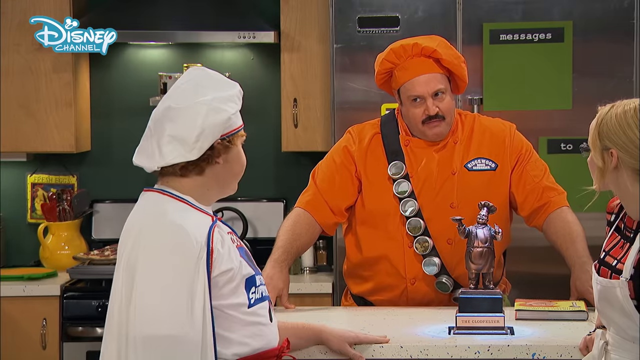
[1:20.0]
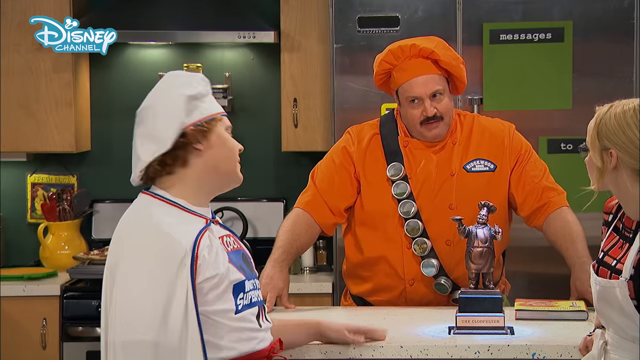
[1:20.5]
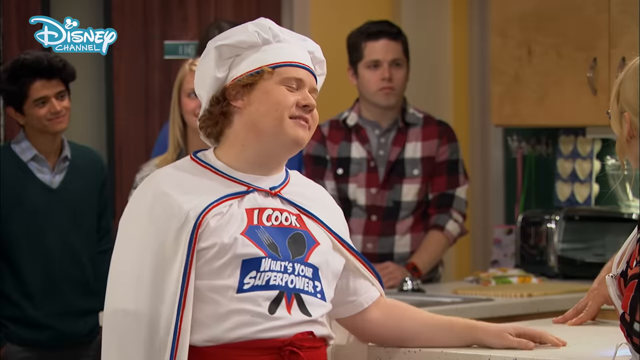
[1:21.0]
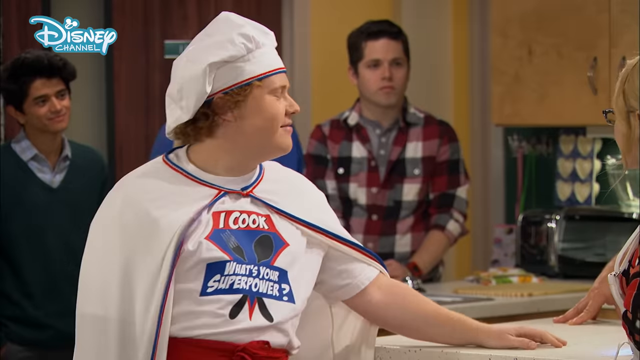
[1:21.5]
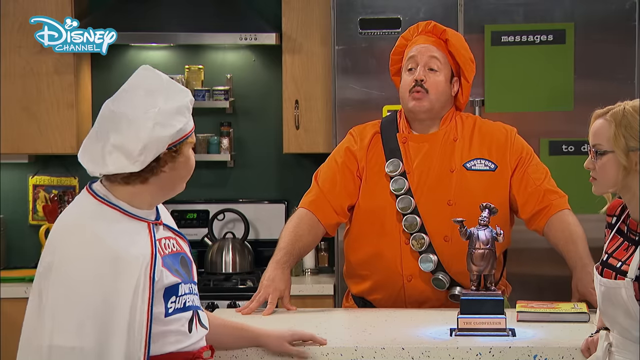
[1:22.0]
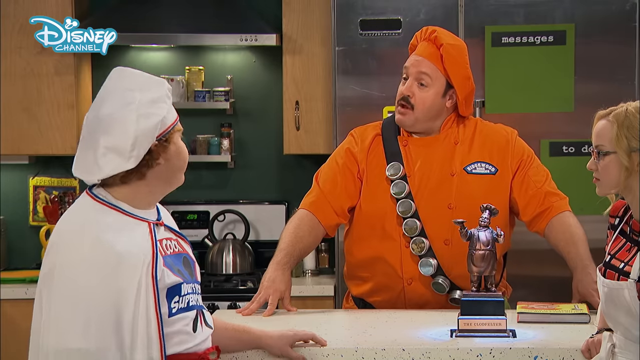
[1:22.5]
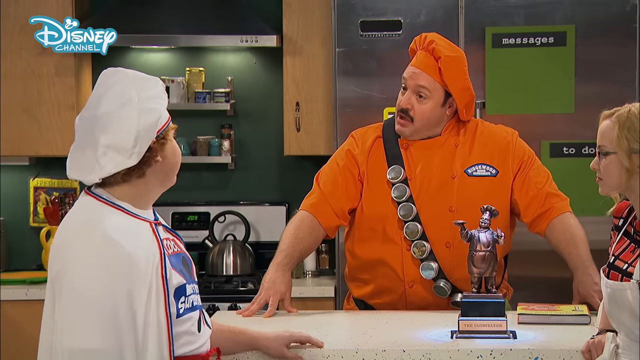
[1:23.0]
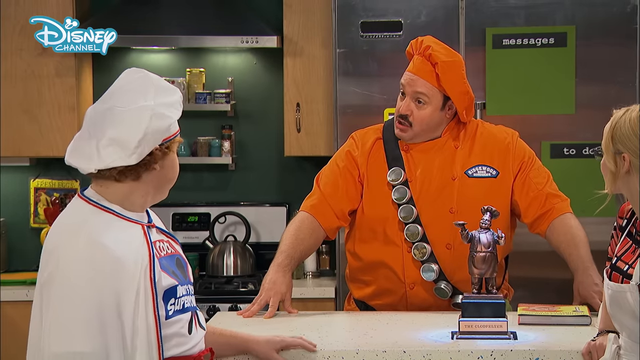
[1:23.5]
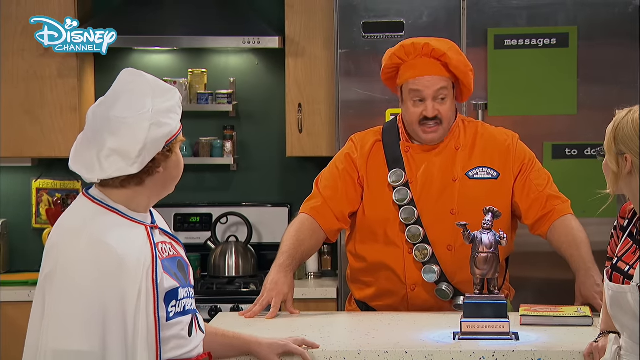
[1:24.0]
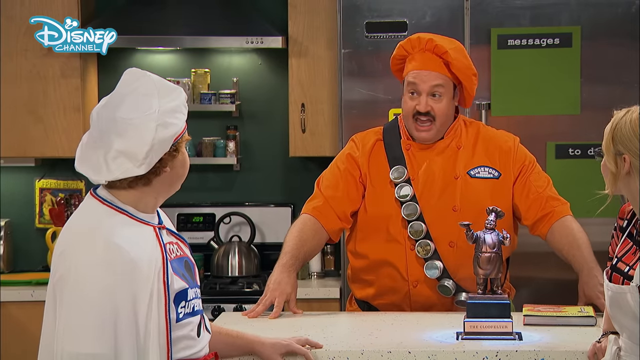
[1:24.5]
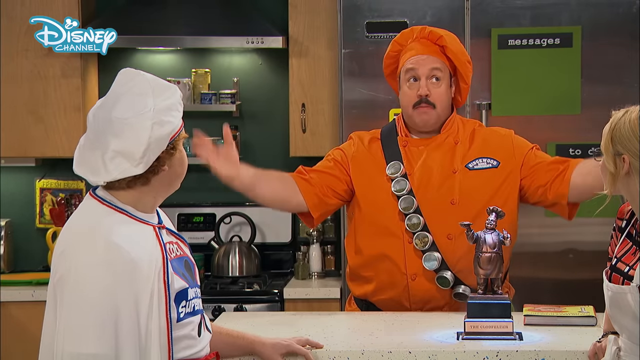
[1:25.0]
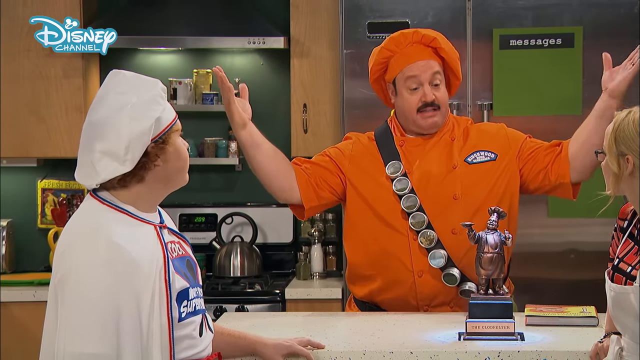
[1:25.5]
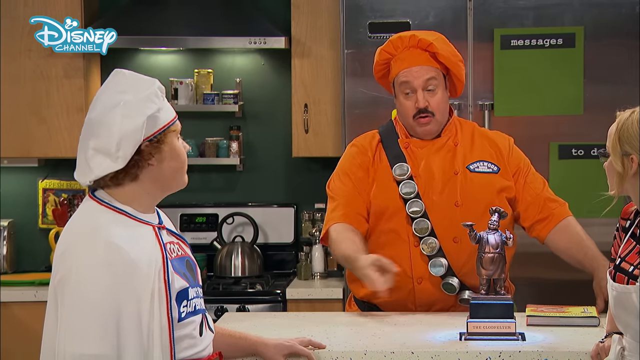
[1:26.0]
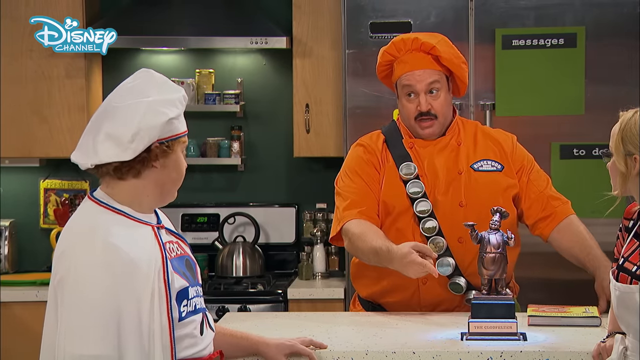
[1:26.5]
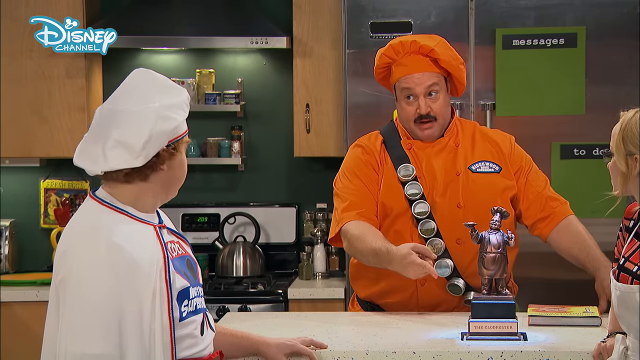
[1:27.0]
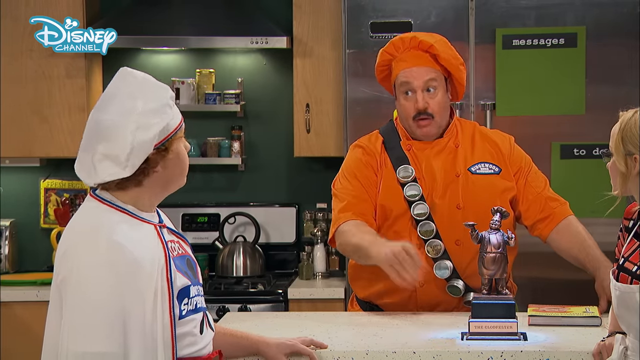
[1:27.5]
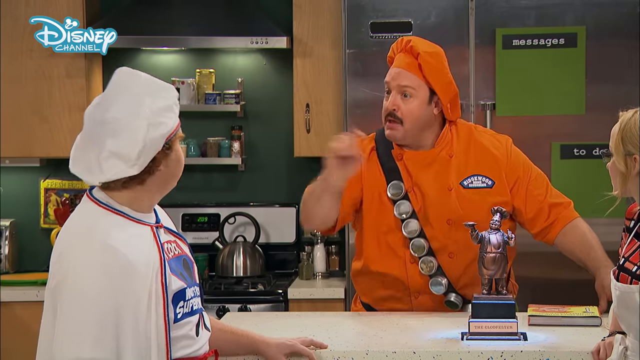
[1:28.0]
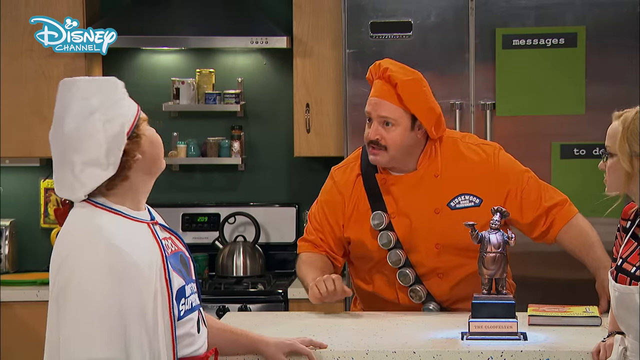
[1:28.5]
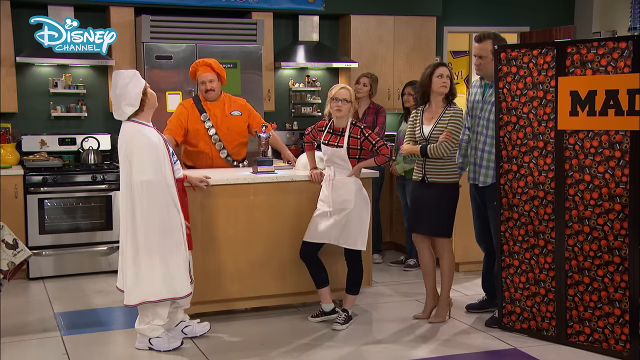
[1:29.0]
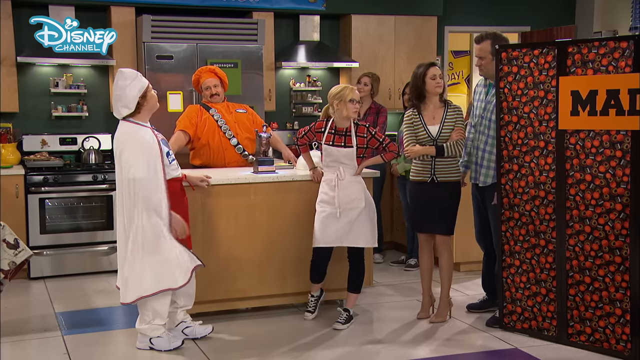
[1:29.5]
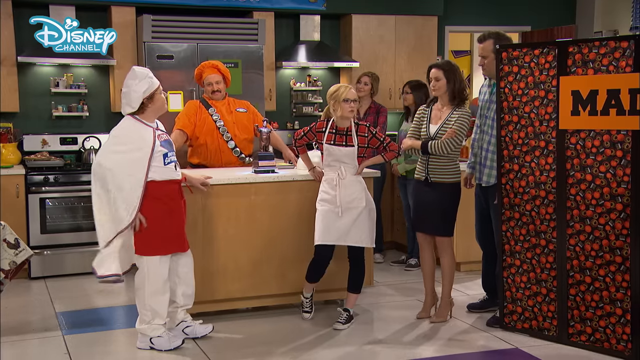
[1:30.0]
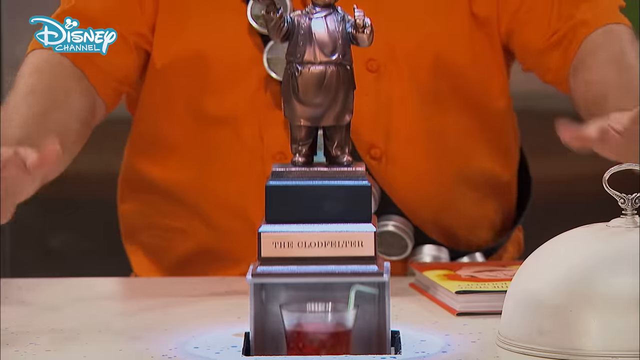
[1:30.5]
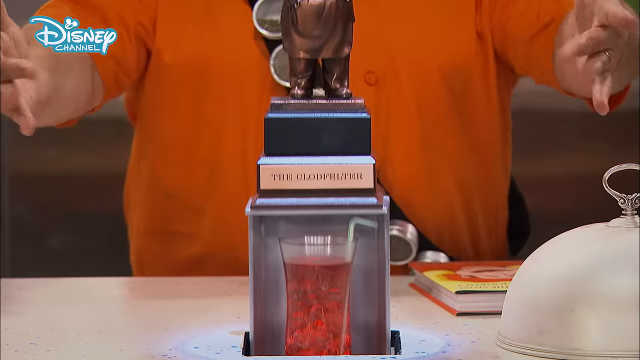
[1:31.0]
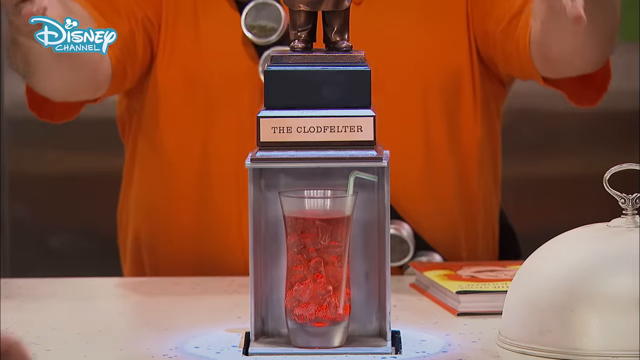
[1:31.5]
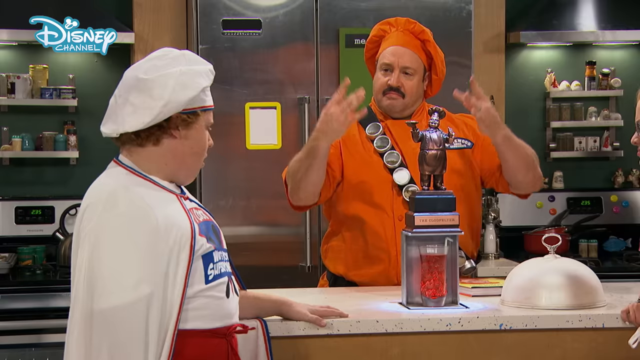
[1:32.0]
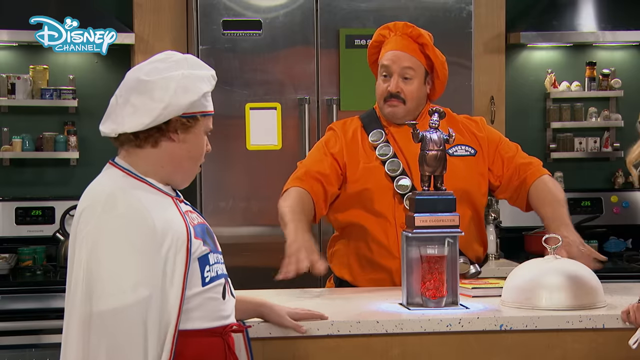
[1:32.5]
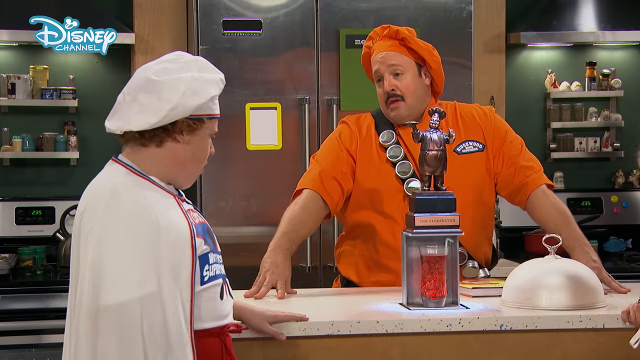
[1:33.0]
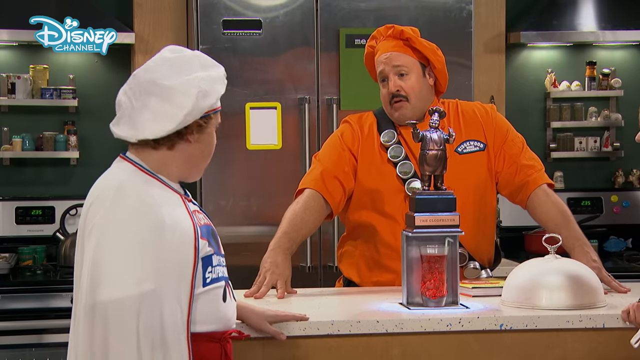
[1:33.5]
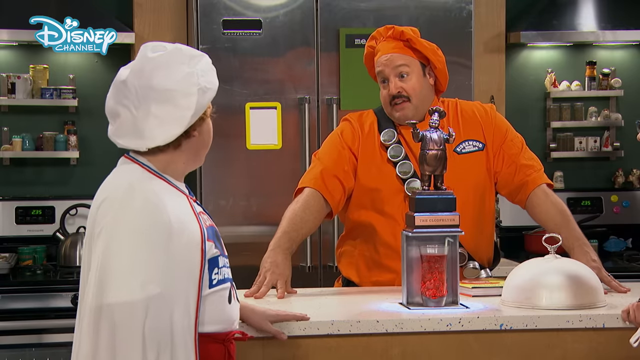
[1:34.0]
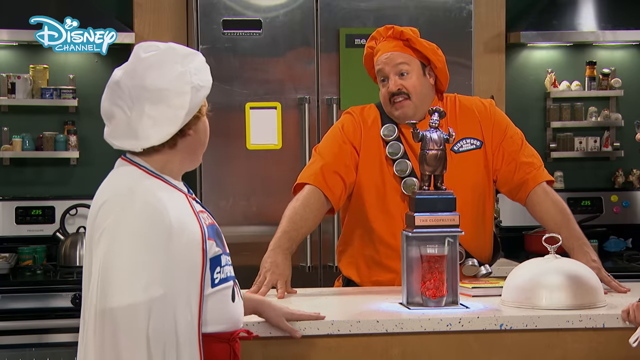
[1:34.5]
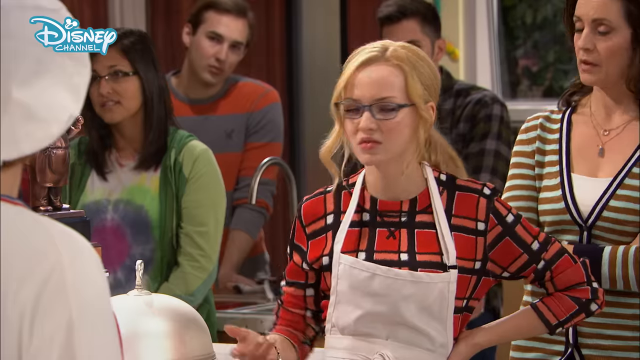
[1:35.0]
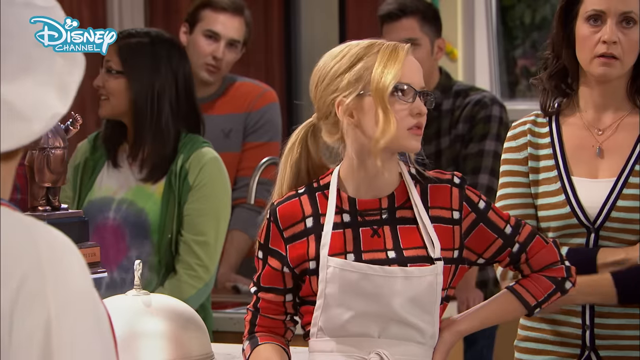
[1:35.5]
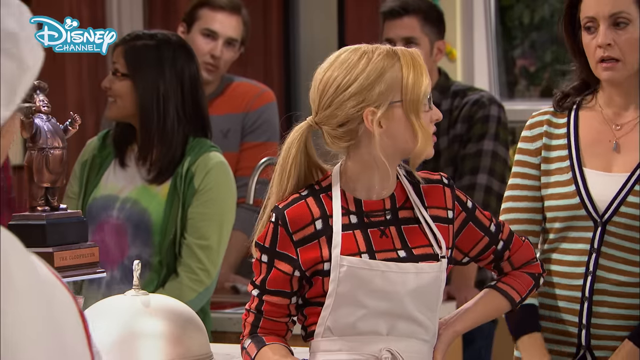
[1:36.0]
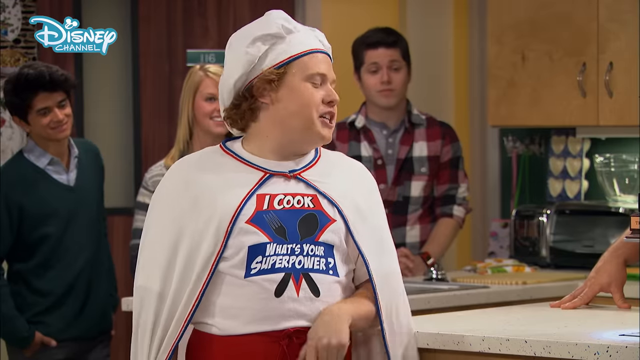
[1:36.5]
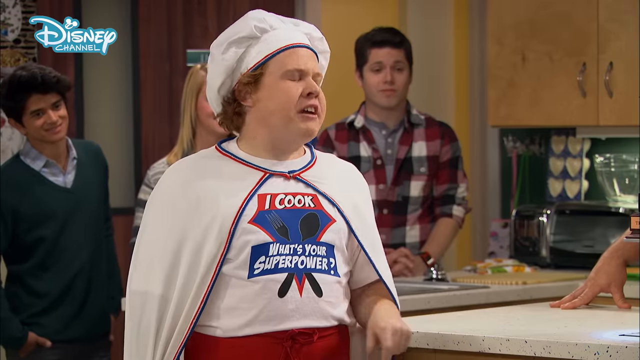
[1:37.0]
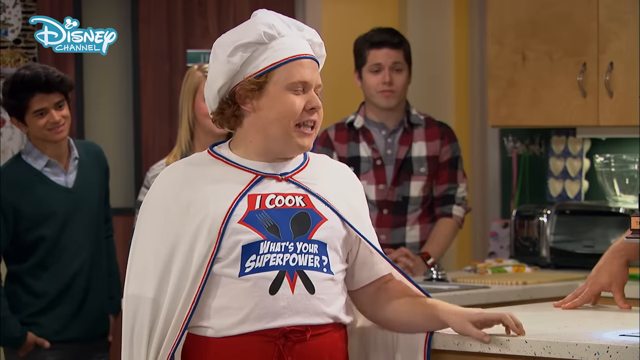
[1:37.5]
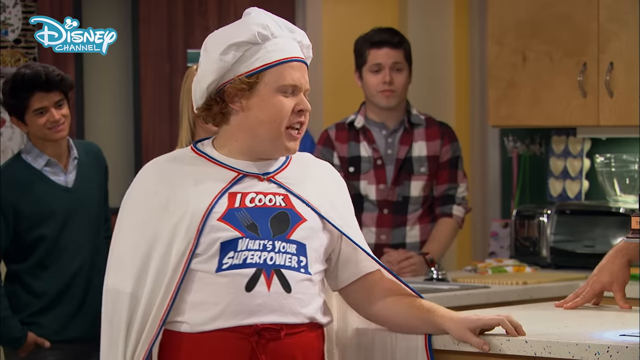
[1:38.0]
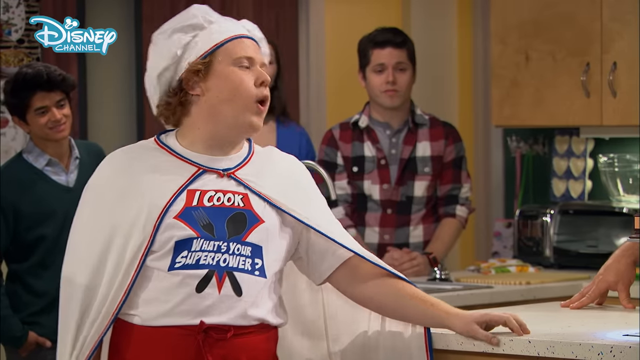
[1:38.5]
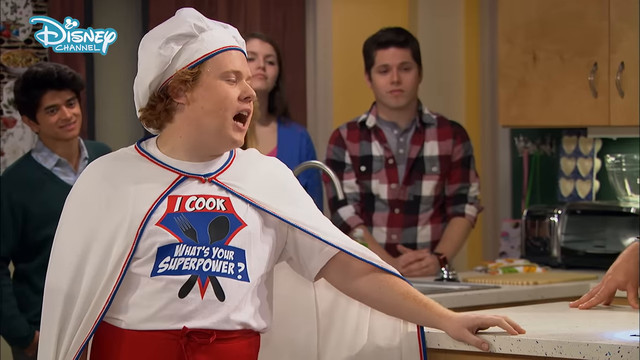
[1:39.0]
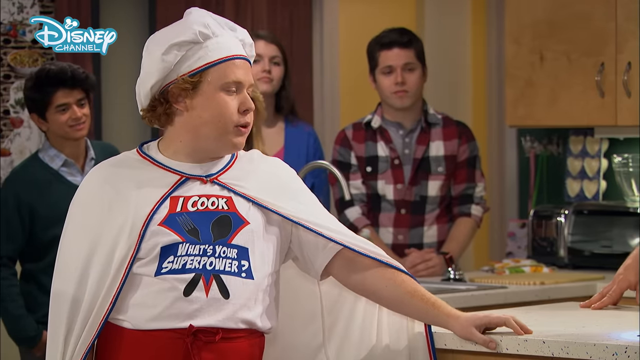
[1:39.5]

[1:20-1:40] Three people stand by a table: a man in an orange chef's uniform, a young man in a white chef's uniform, and a girl in a white apron. There is a statue of a bronzed man wearing a chef's hat and holding up what looks to be a pie plate. Behind the man in orange are what look to be cabinets with a green billboard that says "messages". There is a yellow pitcher that looks like it has maybe Indian corn in it, and what looks like a pizza standing on the stove behind them. The man in the orange chef's outfit looks at the boy and doesn't look very happy. He has a mustache, is kind of heavyset, and has a patch on his uniform with white lettering that is unreadable.